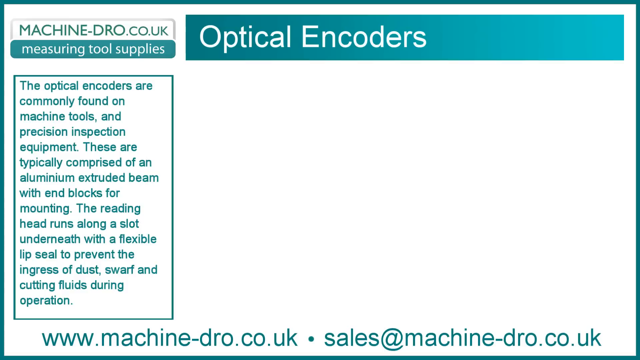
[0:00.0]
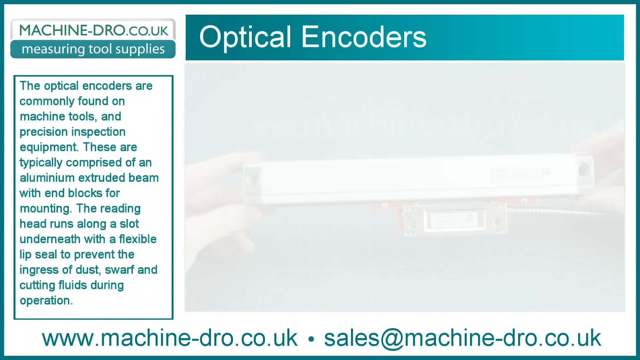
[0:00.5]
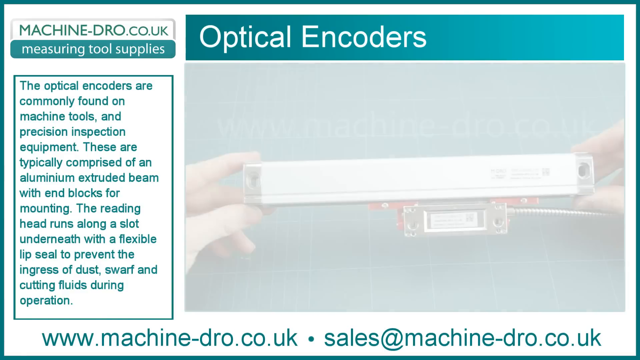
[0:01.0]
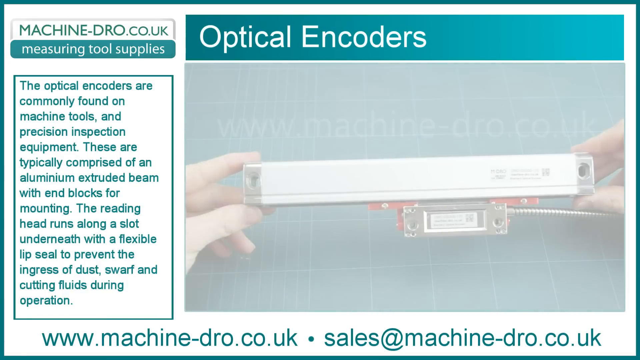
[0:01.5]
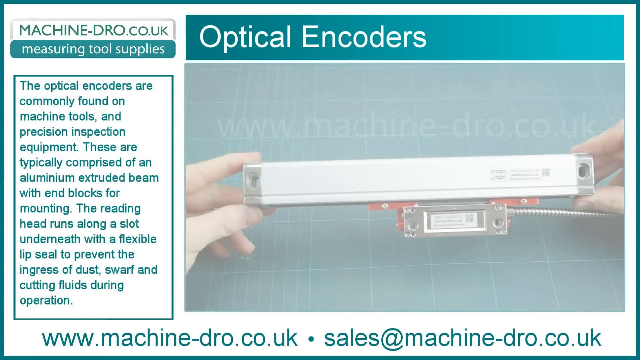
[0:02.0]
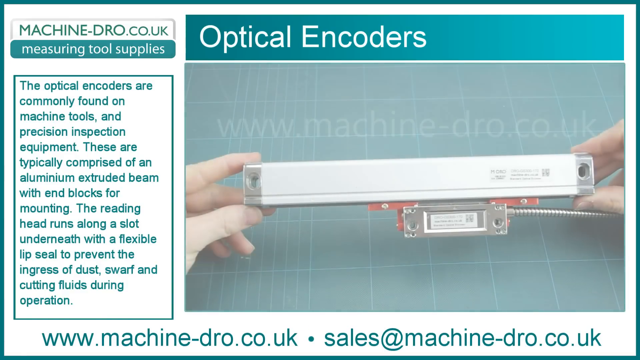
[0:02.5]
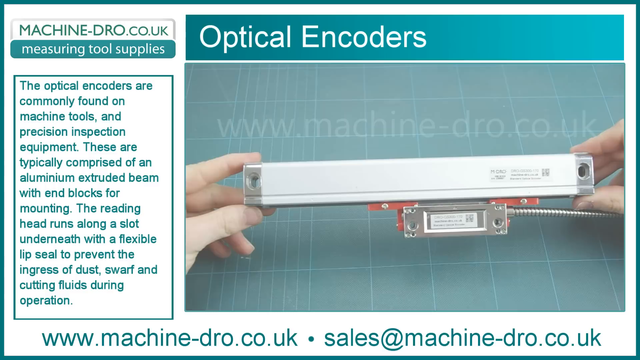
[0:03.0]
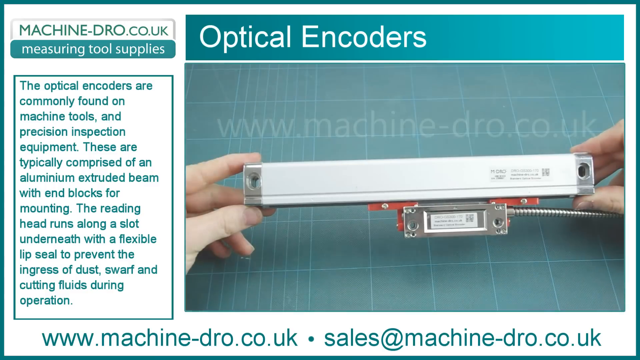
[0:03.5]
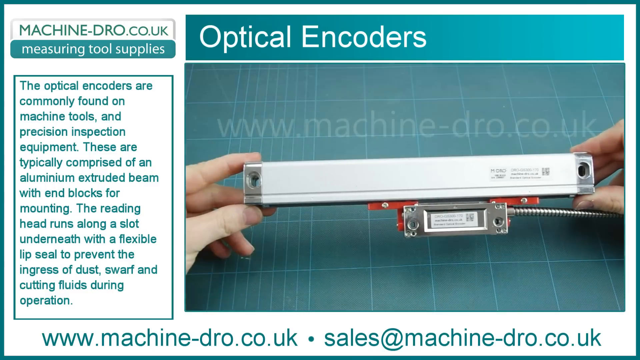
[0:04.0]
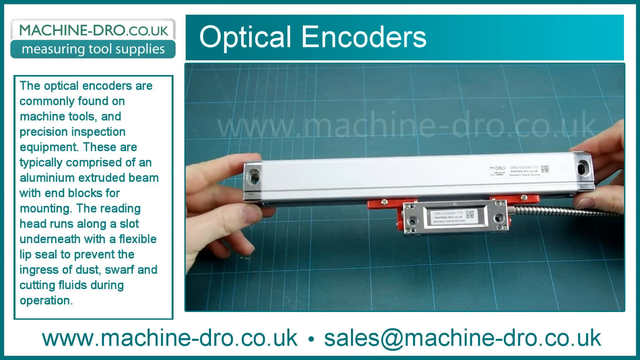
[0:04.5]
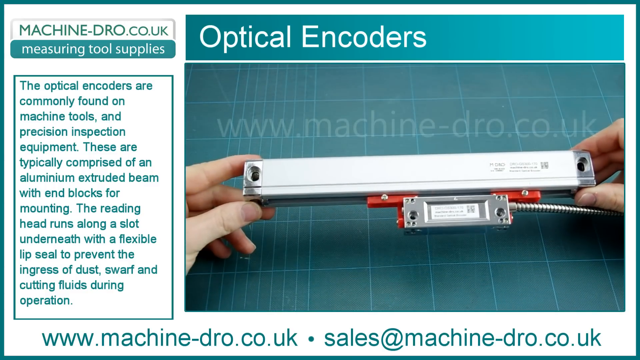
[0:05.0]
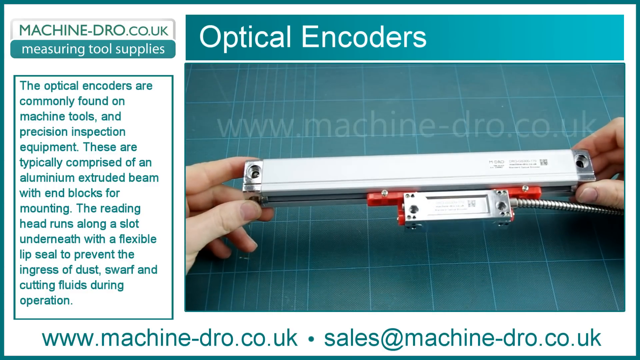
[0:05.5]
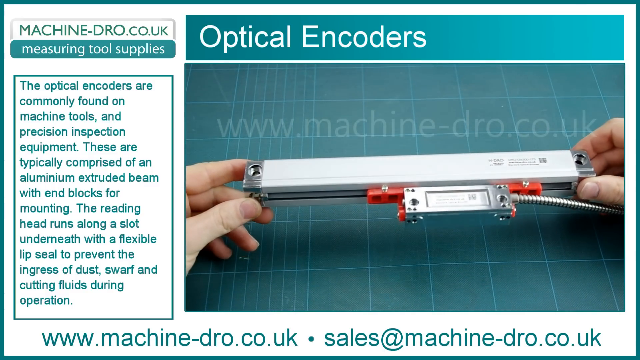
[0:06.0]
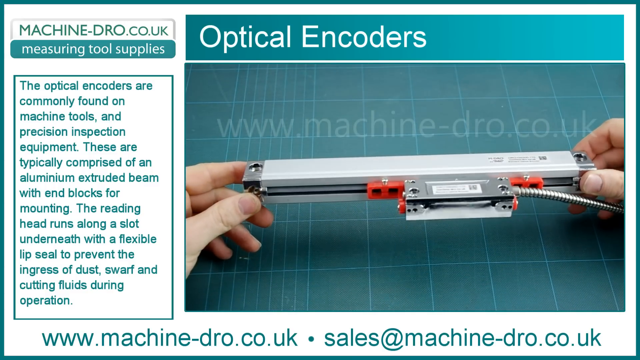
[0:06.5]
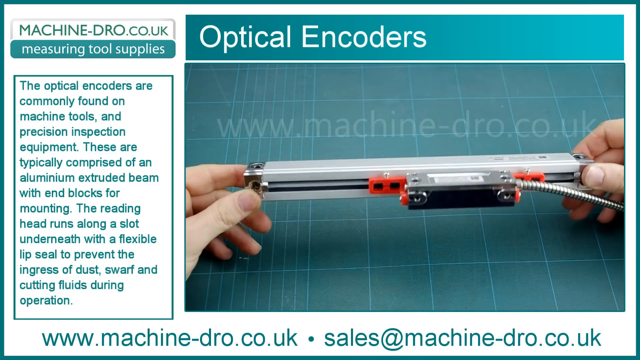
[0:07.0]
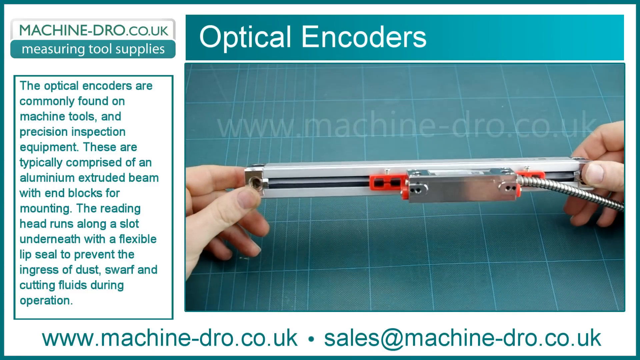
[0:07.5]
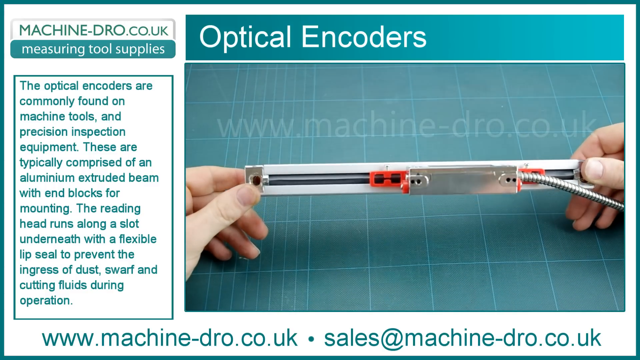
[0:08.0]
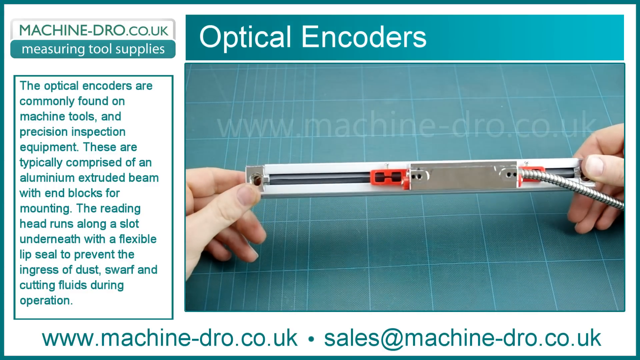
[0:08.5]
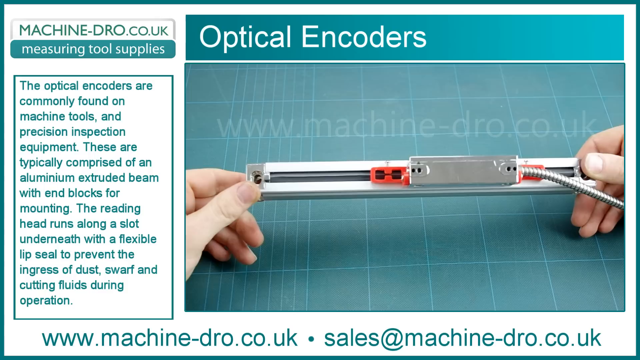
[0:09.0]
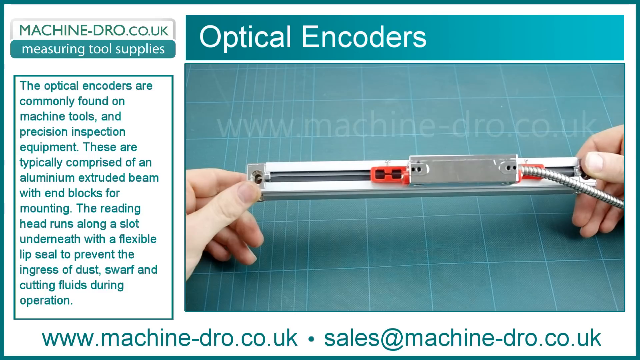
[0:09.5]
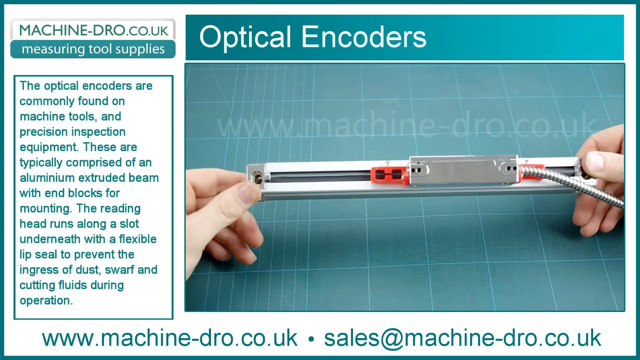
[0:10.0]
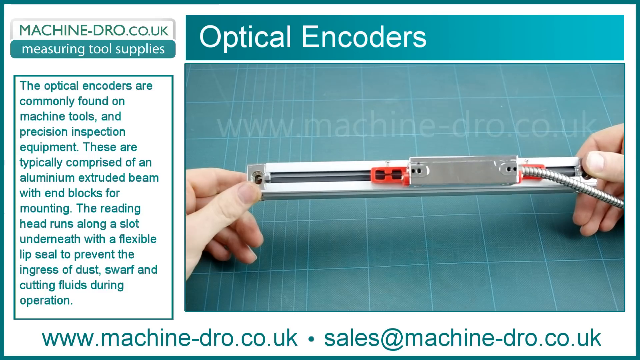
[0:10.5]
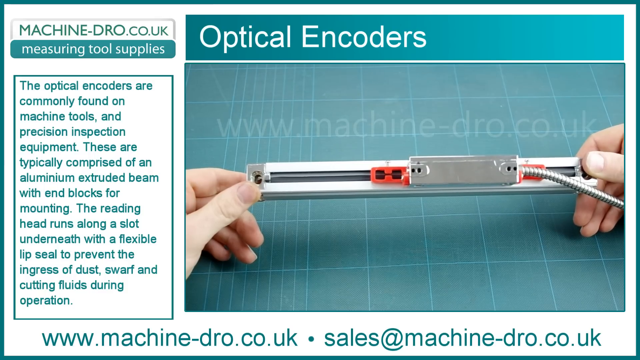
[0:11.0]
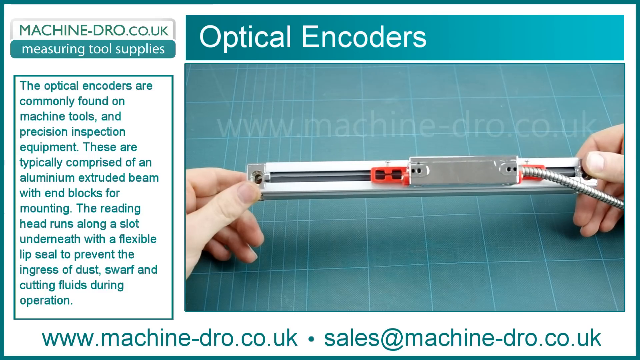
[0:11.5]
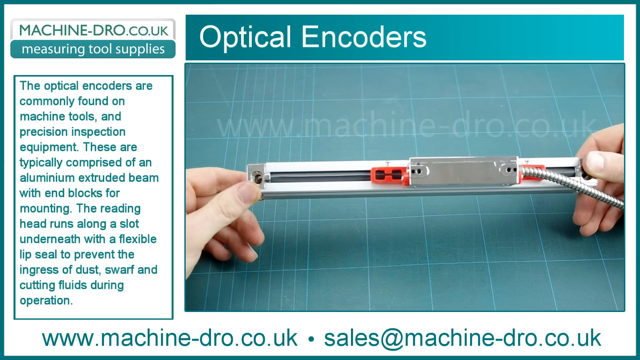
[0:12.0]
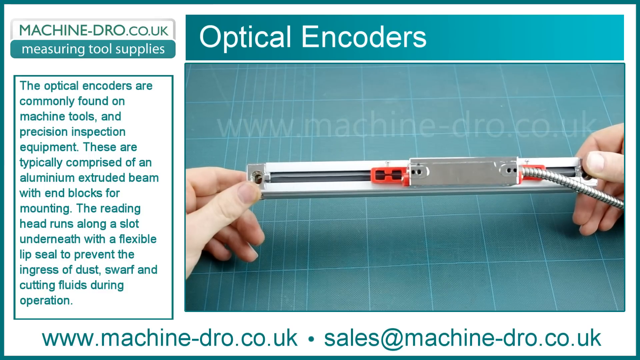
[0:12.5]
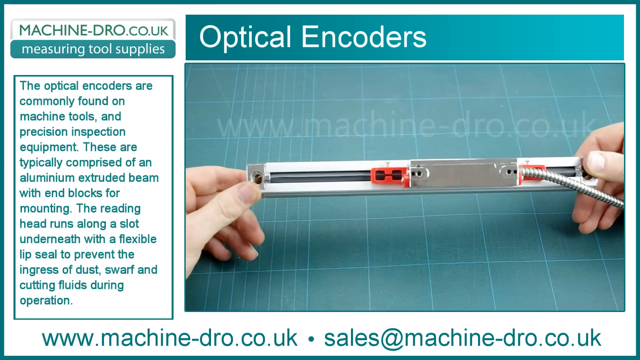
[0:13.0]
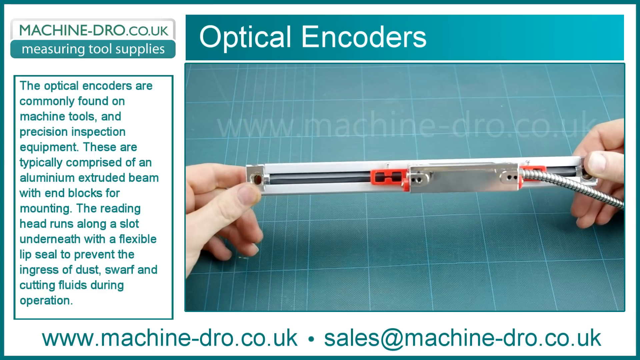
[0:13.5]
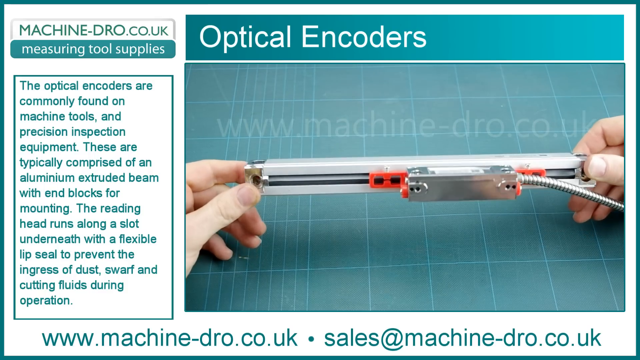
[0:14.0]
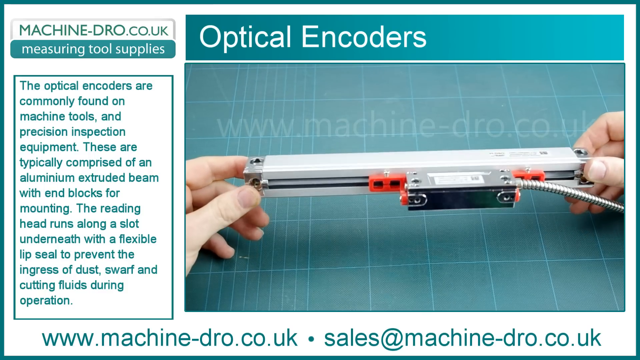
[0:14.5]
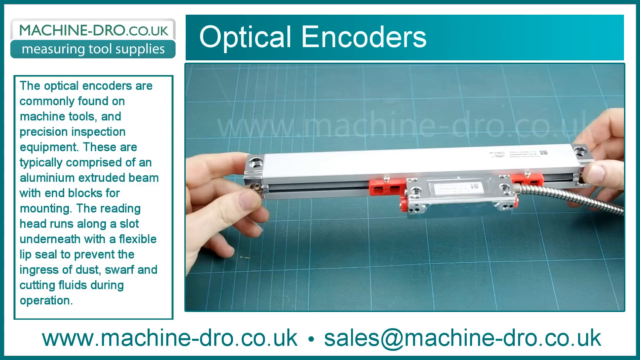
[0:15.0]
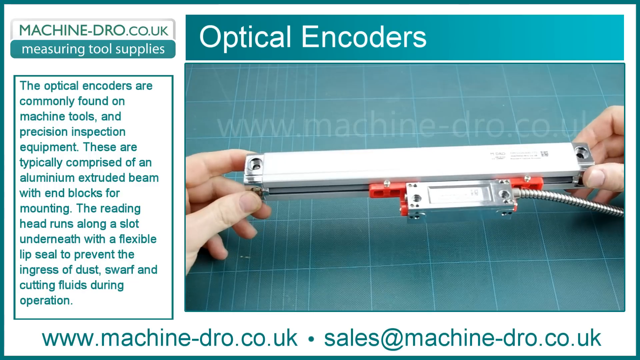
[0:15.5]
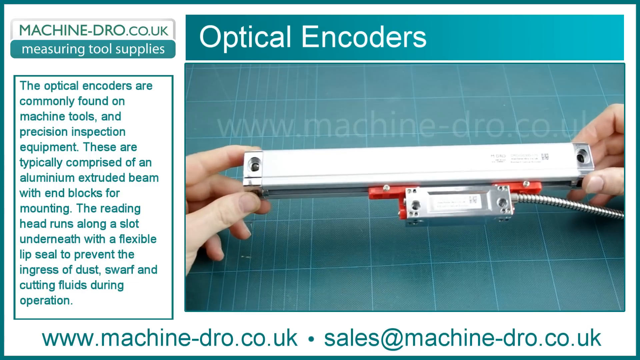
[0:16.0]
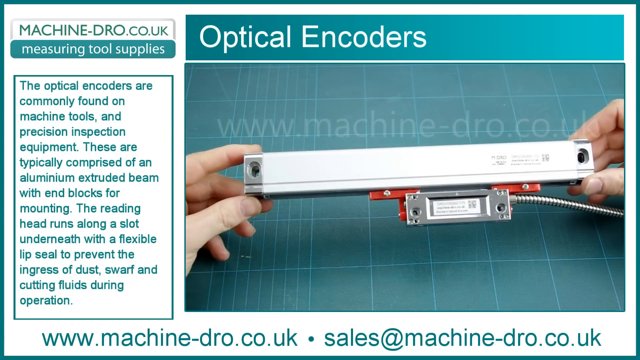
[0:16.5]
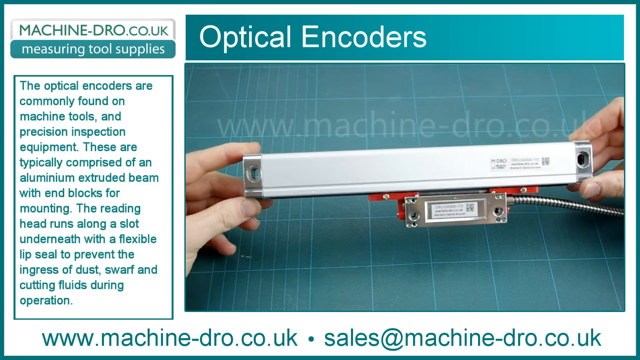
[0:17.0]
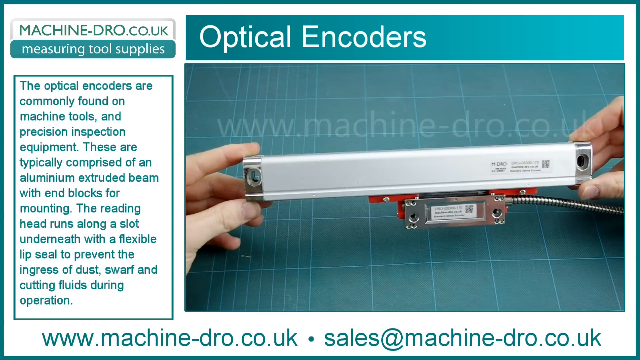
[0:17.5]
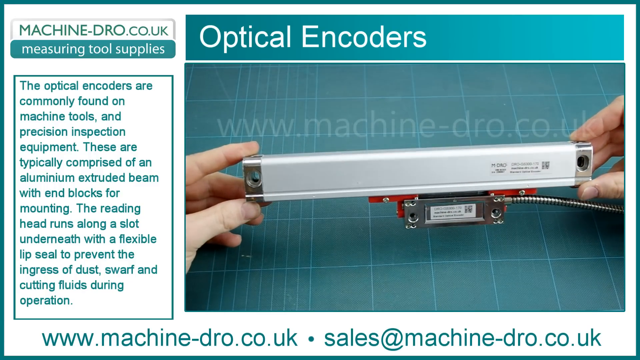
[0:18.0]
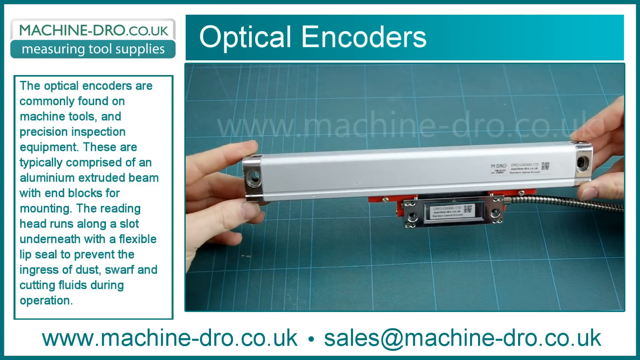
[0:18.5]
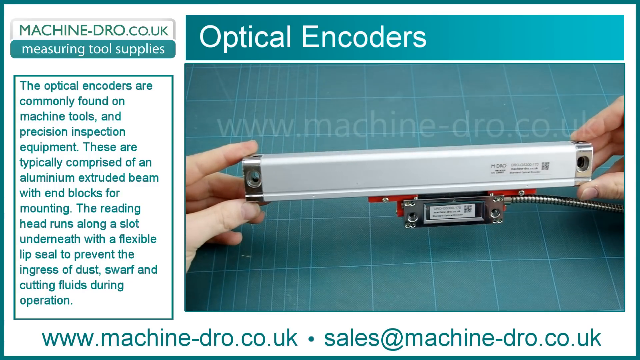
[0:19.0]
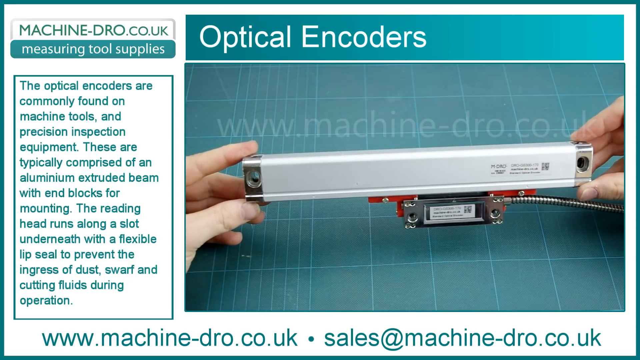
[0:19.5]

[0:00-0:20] A video shows someone with a long piece of equipment that has a hole in it. There is a silver box with a long, rather thick silver wire that looks like it has a little spiral on it. On-screen description text says these are "typically comprised of an aluminum extruded beam with end blocks" that mount it. The equipment has holes that look like they could be attached to something. The text also describes the reading head running along and a flexible webbed seal that prevents the ingress of dust, swarf, and liquid fluids during operation. The equipment appears to be a medical device used during operations.